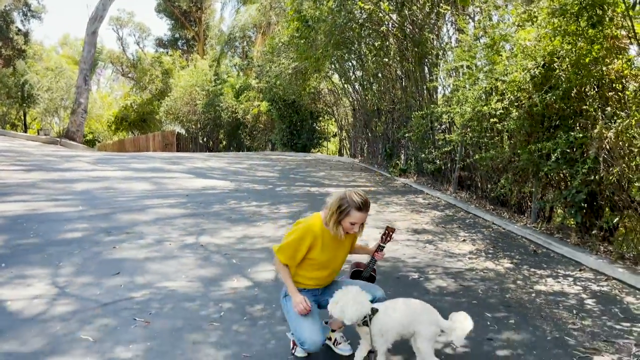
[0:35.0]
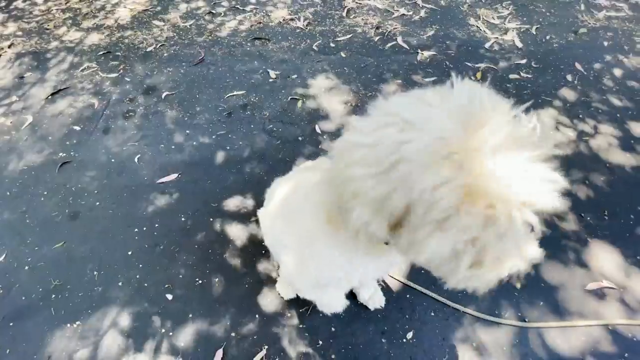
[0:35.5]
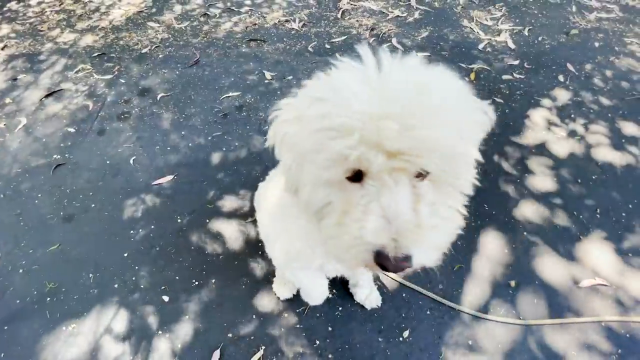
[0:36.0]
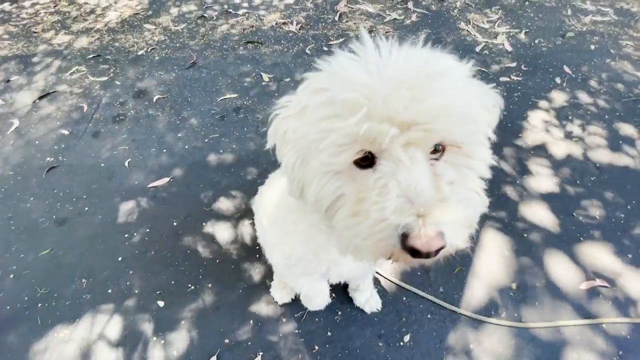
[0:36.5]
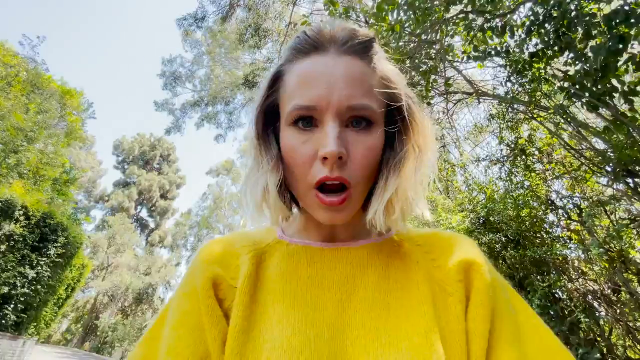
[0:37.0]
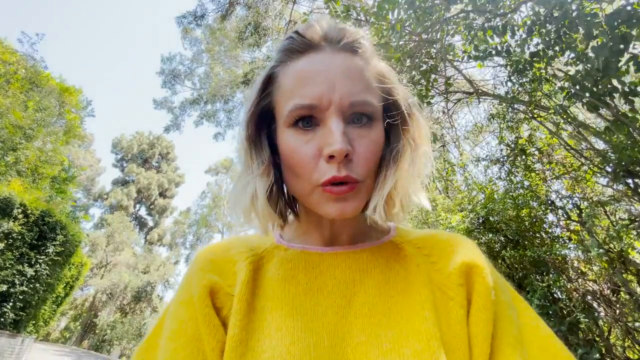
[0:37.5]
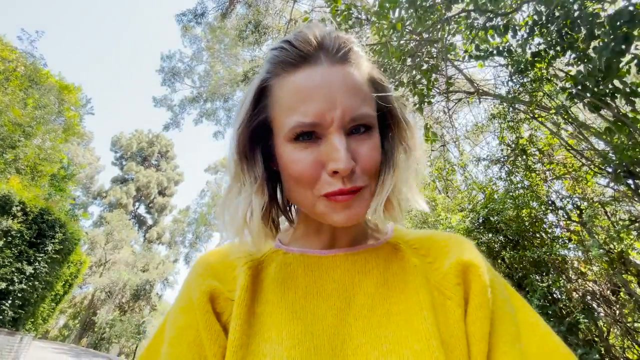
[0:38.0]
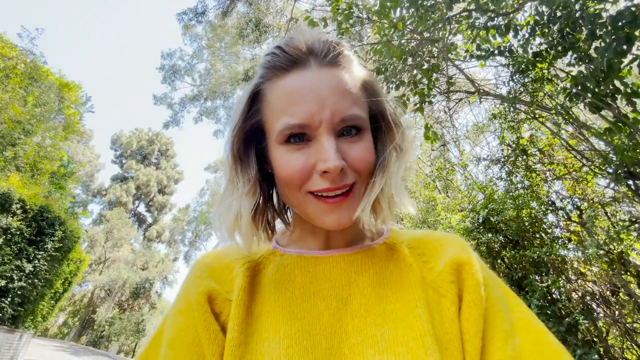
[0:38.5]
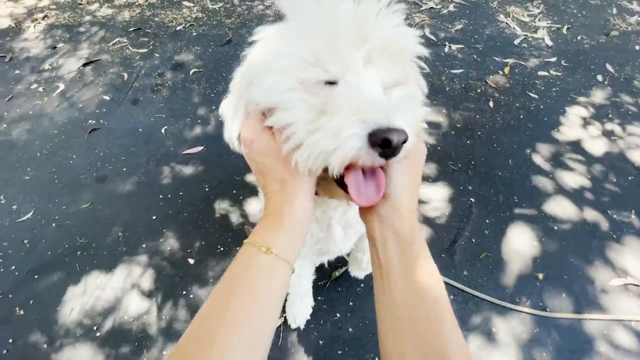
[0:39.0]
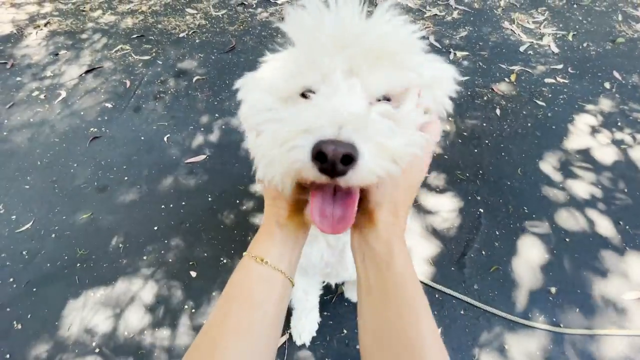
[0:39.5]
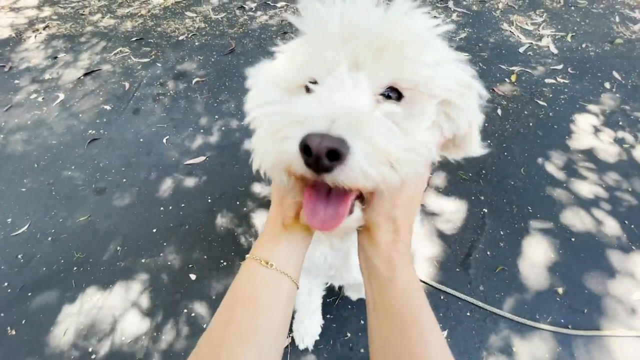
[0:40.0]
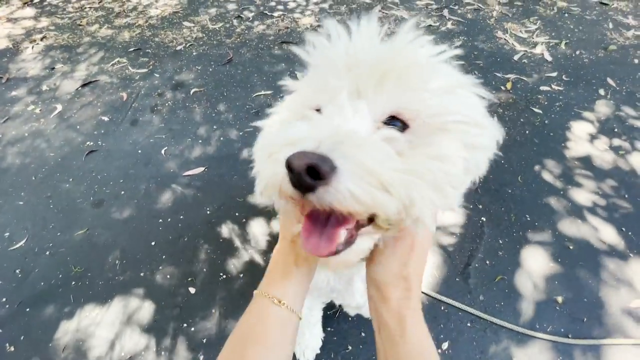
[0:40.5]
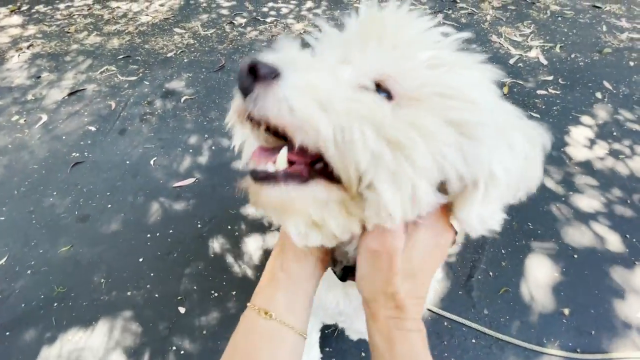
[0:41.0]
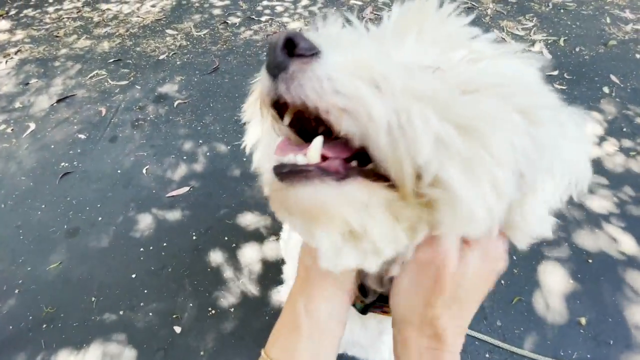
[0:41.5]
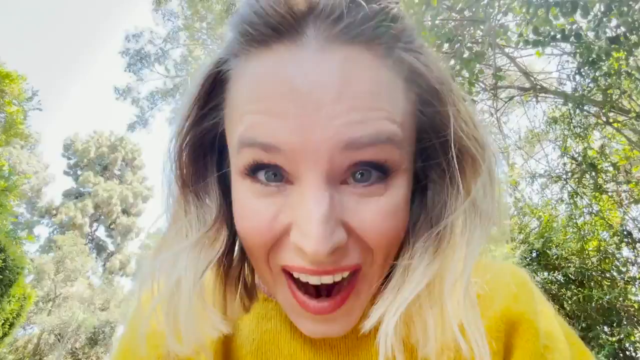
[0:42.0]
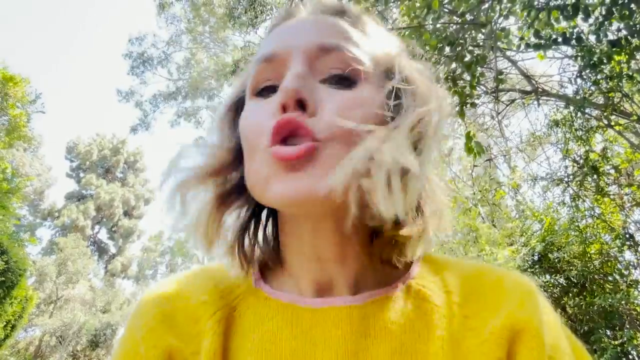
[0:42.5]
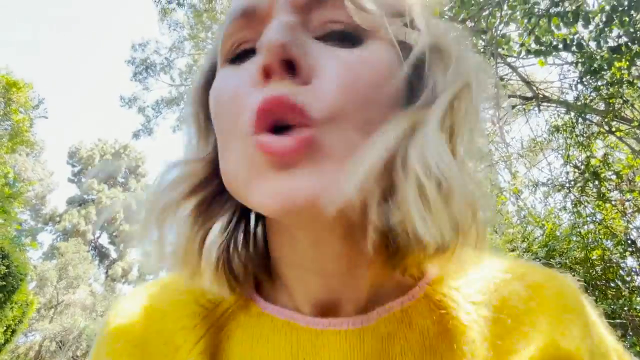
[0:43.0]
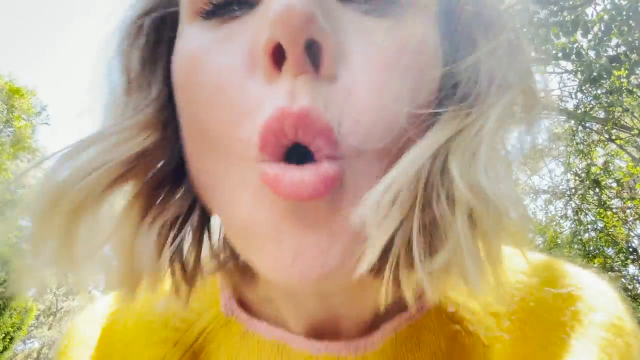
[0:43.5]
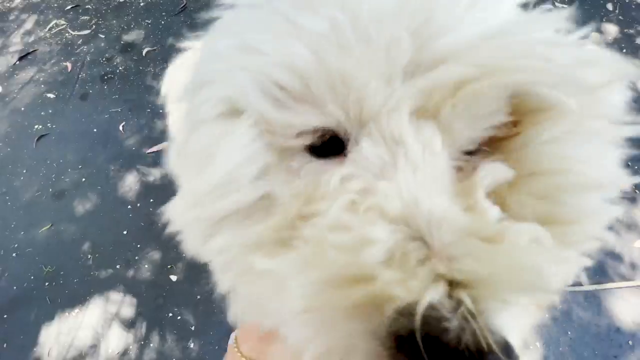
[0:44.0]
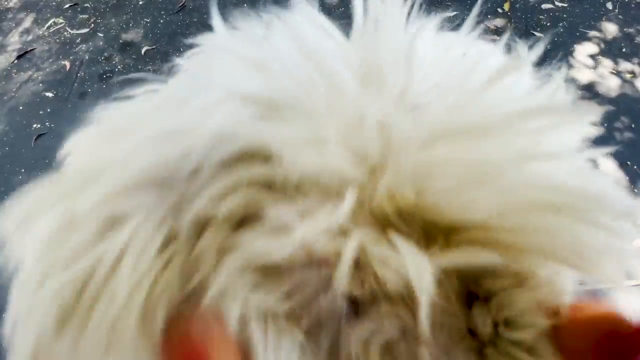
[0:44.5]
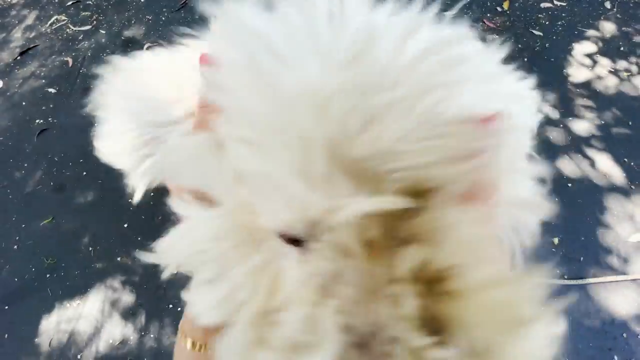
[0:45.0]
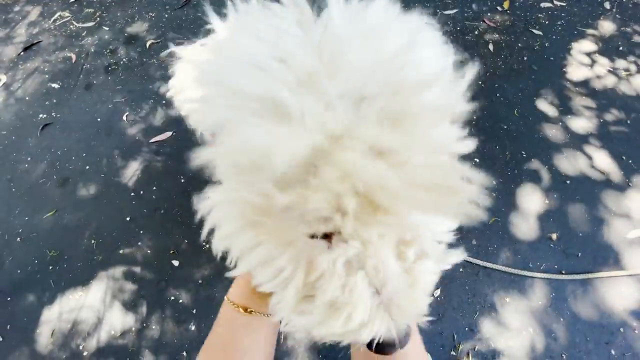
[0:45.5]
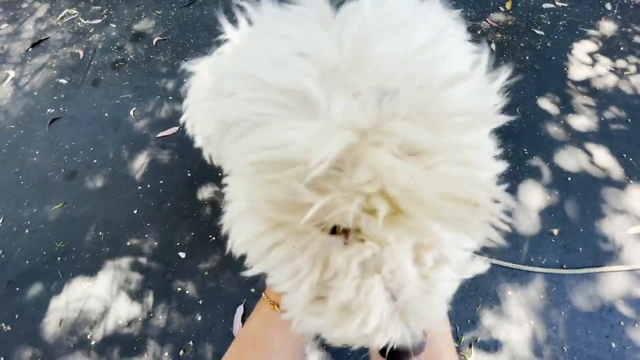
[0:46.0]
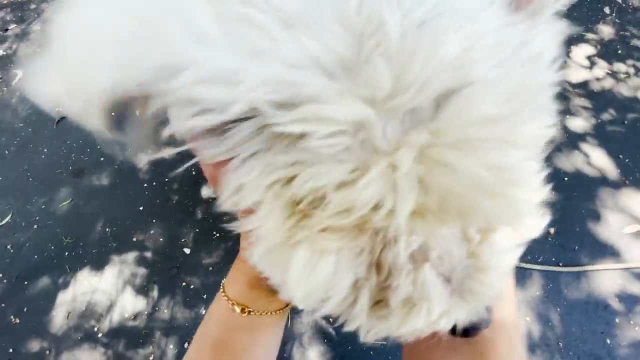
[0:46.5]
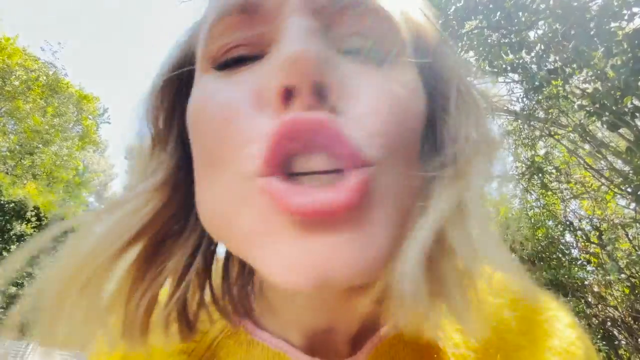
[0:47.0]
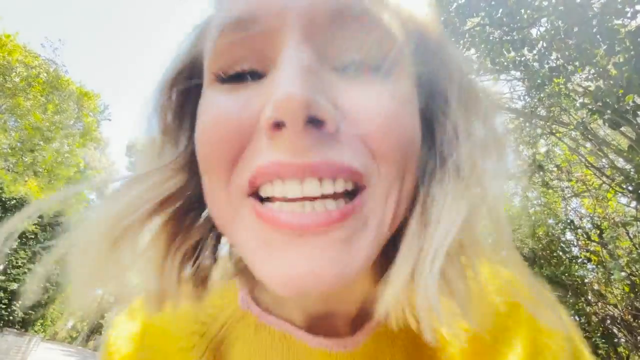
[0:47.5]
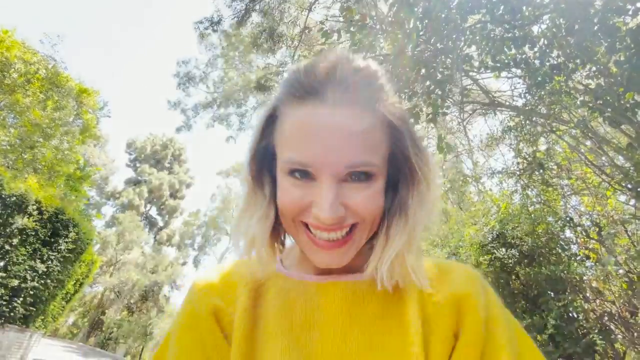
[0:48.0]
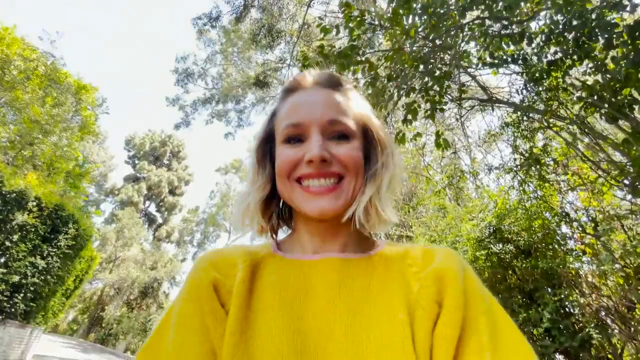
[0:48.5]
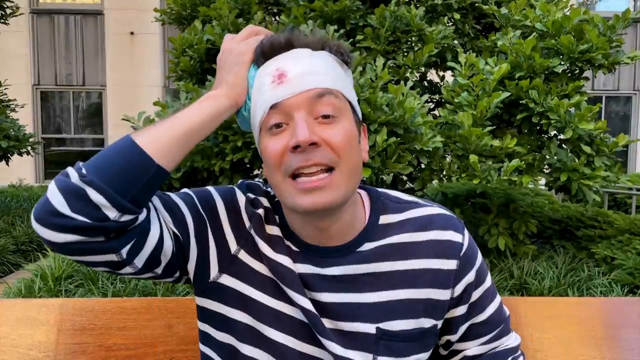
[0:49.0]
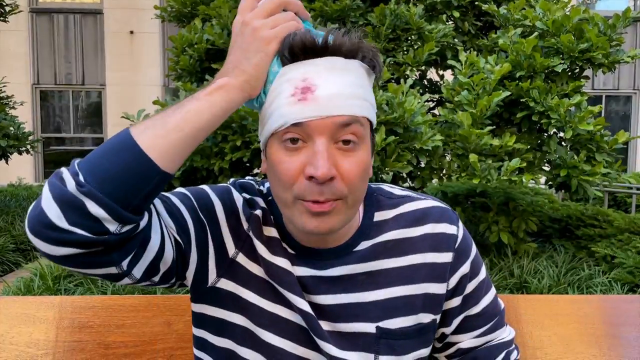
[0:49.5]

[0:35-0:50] The woman is knelt down in her driveway, talking to and caressing a little white dog that looks like it has had a haircut; it is solid white and fuzzy and wears a collar with a leash hooked to it. She scrubs his ears and looks like she is baby talking to him, then stands up, and the camera pans off. She wears a yellow sweater with what looks like a pink collar around the neck, blue jeans, and a little gold bracelet on her left wrist; her blonde hair is pulled back on top of her head, and she wears makeup and what looks like red lipstick. The video then pans to another scene of a man sitting out front of a house. He wears a black and white striped long-sleeved shirt and has short brown hair, looks like he has a bandage wrapped around his head, and holds ice on the back of his head as if injured while he speaks.